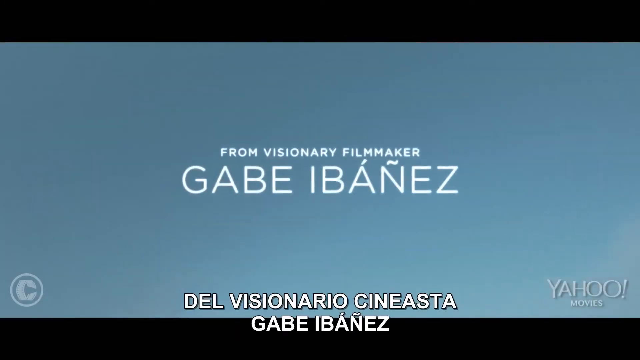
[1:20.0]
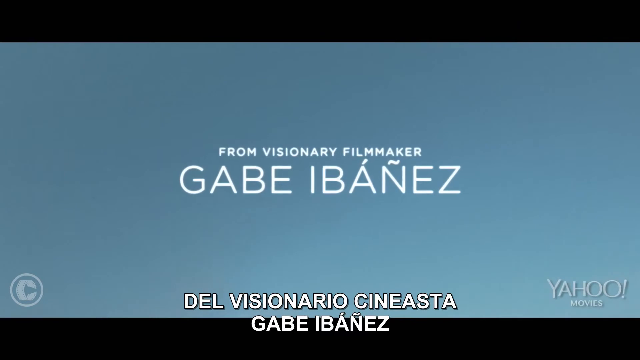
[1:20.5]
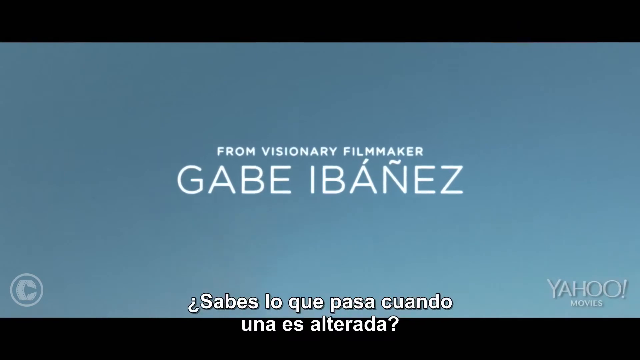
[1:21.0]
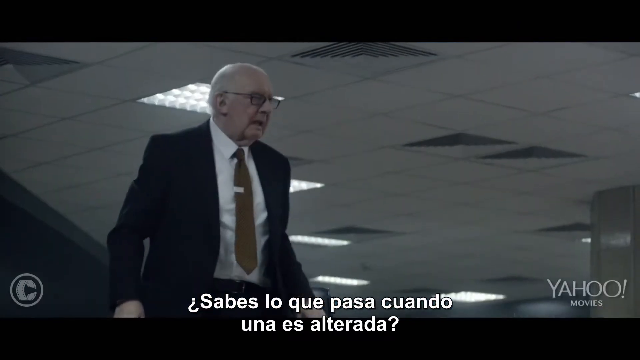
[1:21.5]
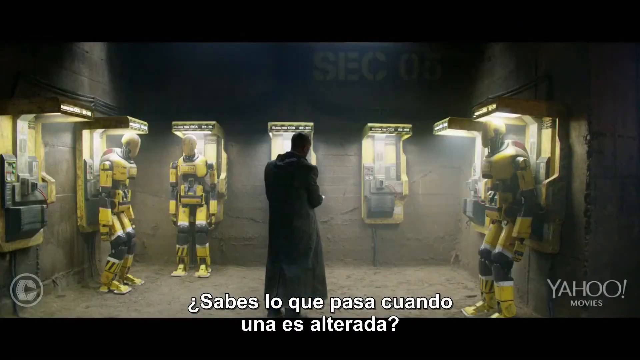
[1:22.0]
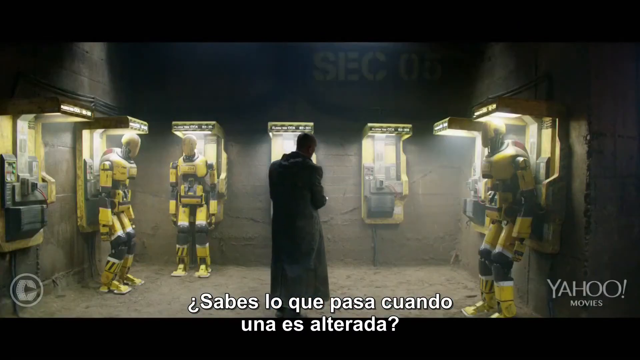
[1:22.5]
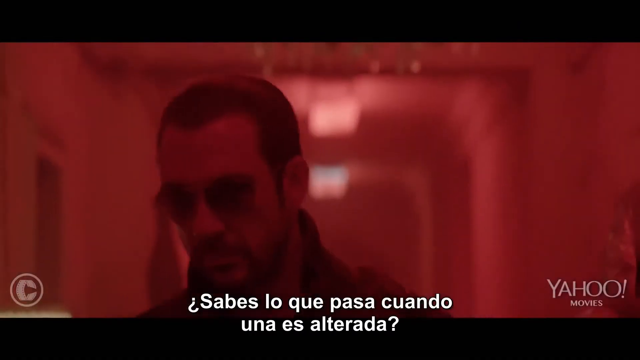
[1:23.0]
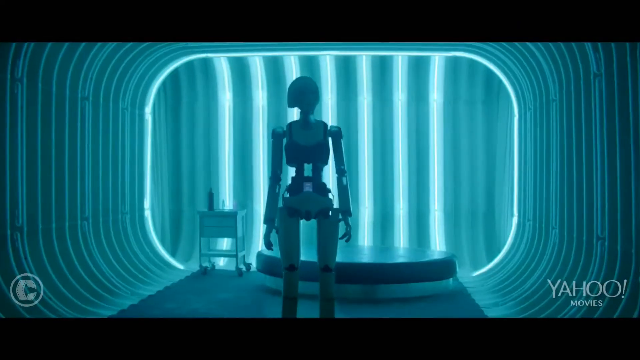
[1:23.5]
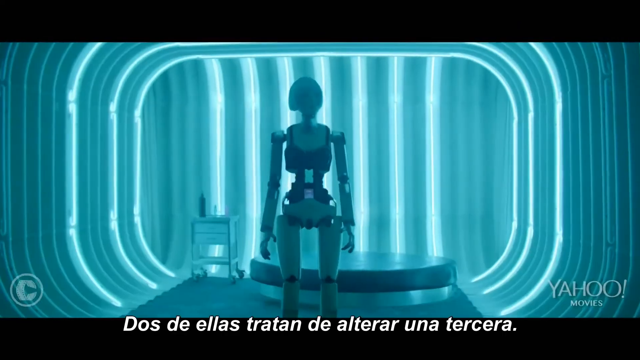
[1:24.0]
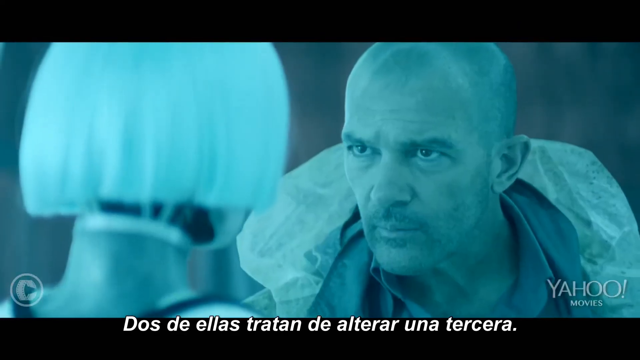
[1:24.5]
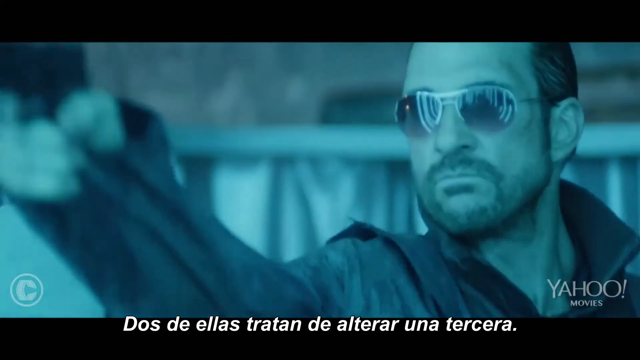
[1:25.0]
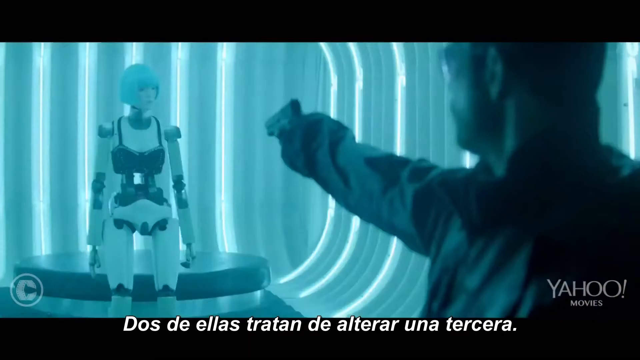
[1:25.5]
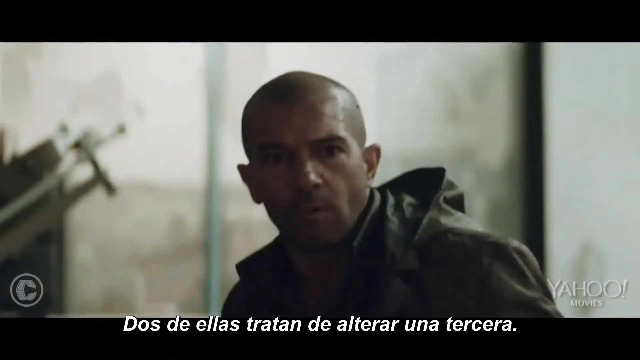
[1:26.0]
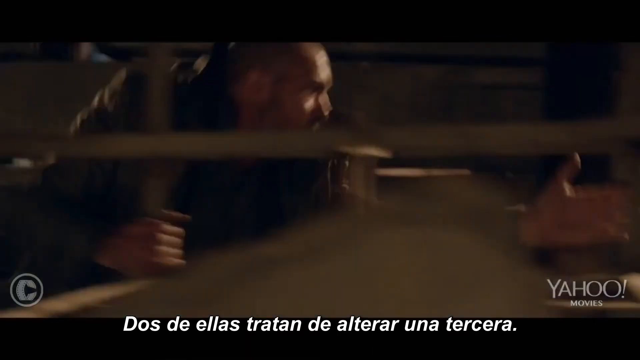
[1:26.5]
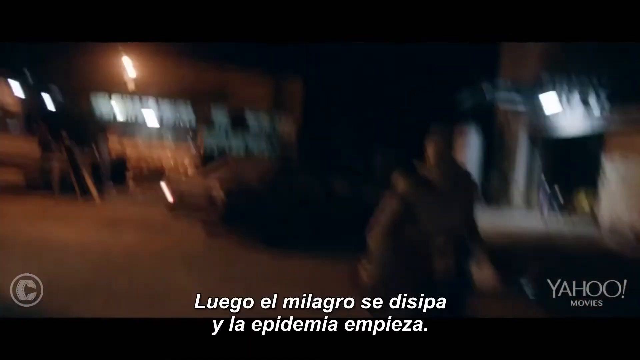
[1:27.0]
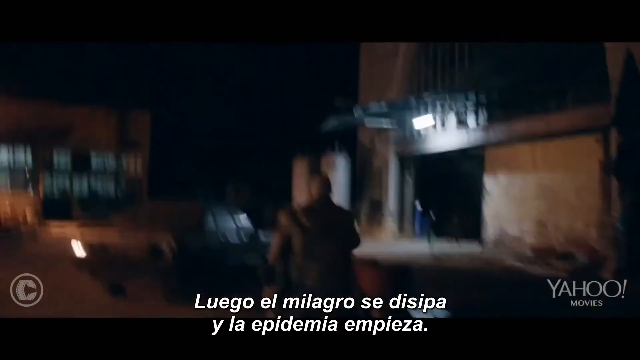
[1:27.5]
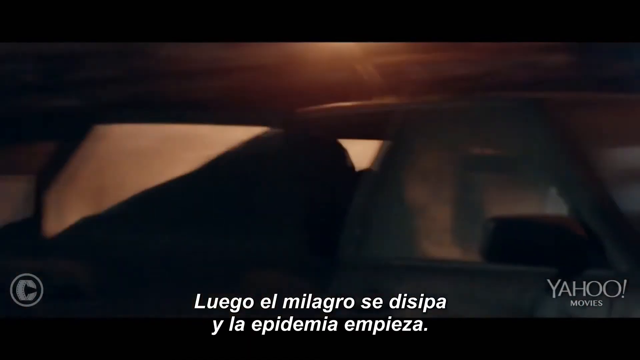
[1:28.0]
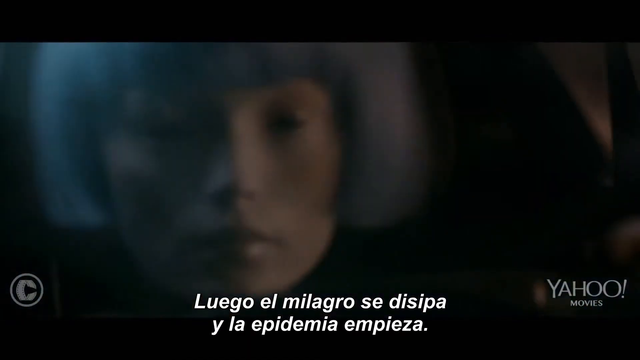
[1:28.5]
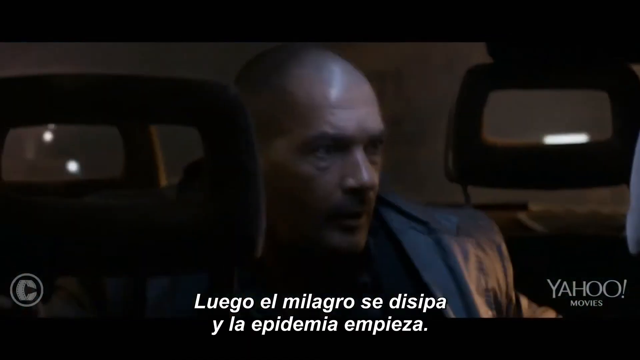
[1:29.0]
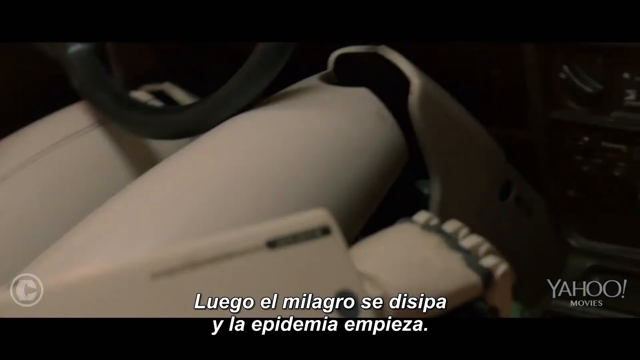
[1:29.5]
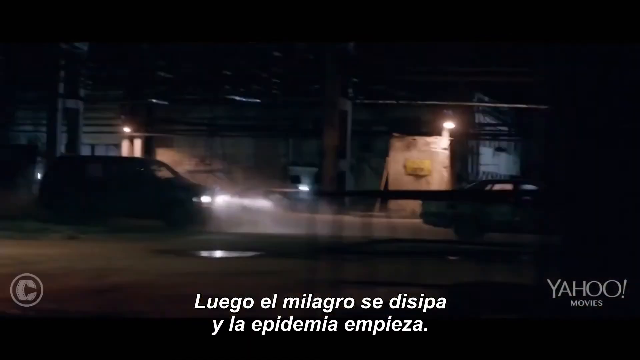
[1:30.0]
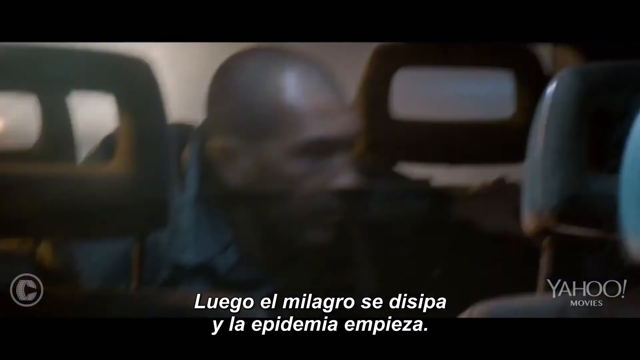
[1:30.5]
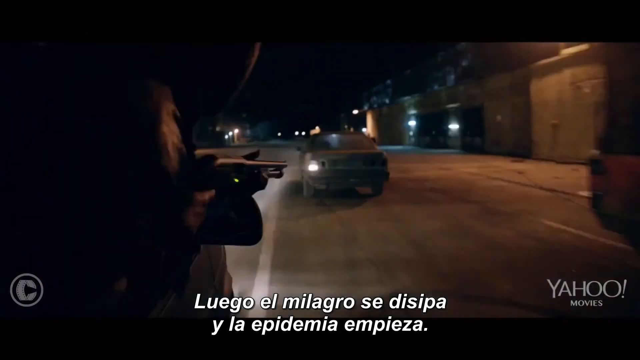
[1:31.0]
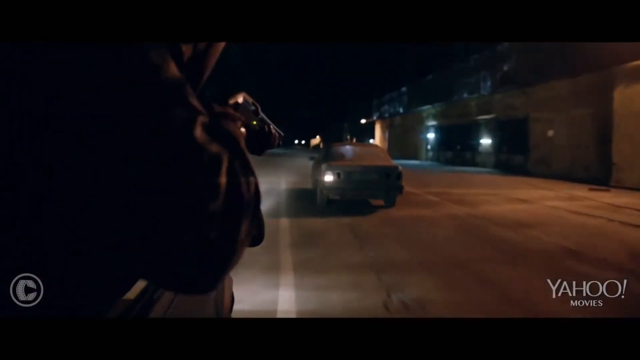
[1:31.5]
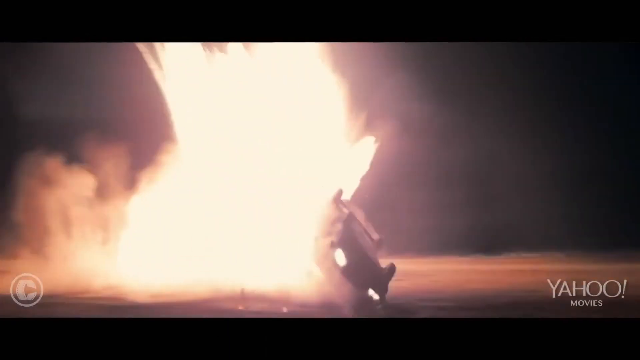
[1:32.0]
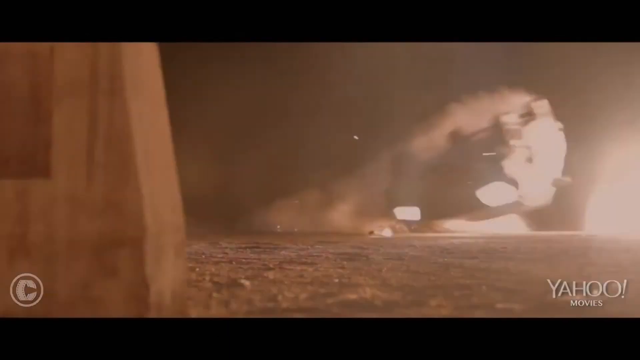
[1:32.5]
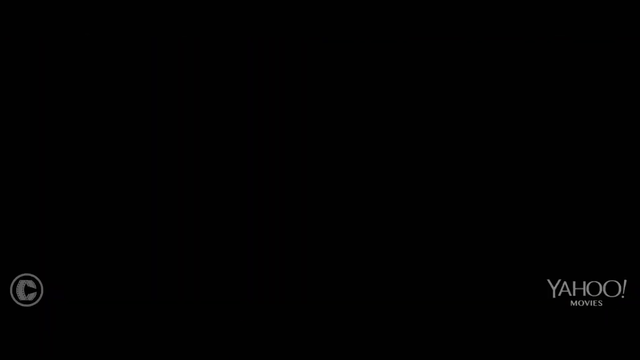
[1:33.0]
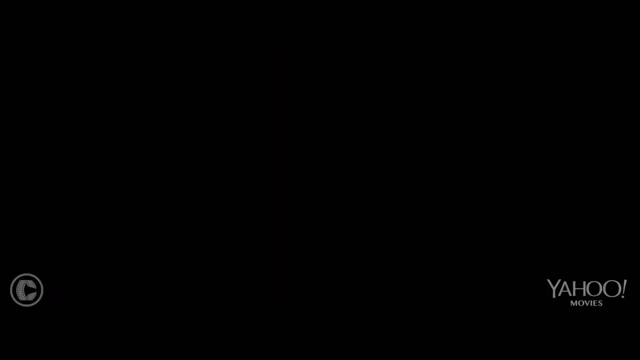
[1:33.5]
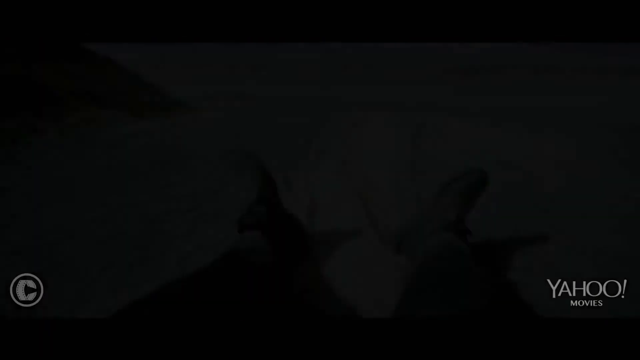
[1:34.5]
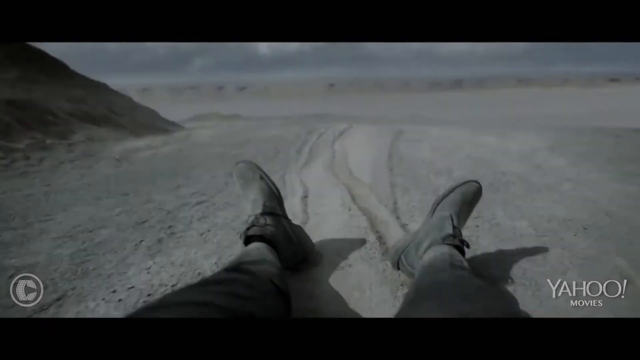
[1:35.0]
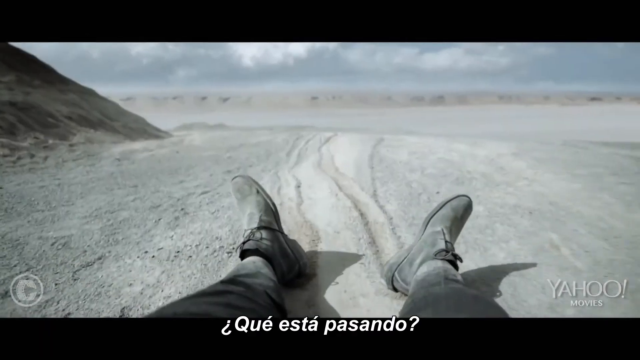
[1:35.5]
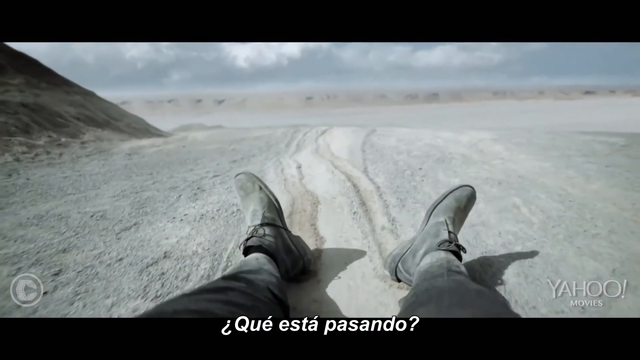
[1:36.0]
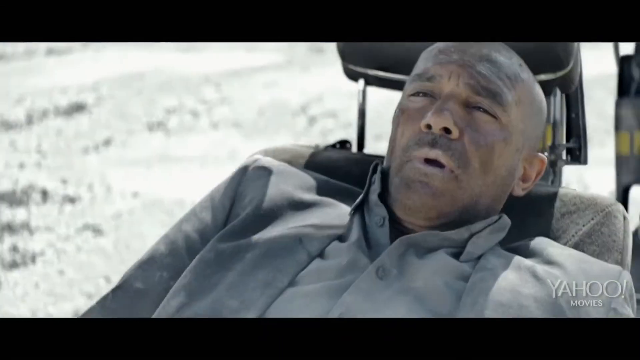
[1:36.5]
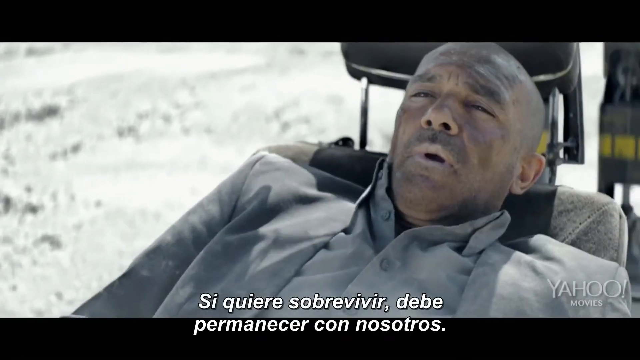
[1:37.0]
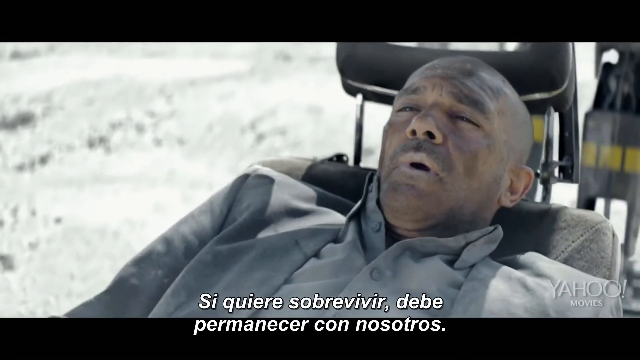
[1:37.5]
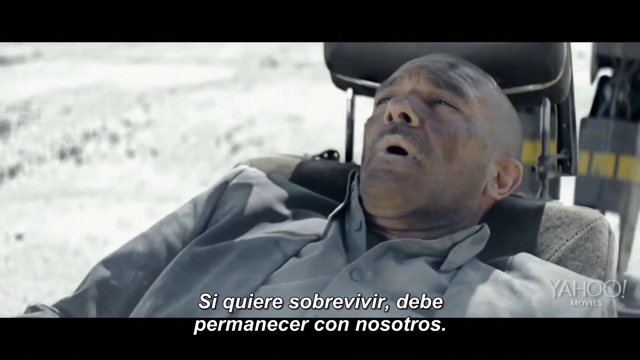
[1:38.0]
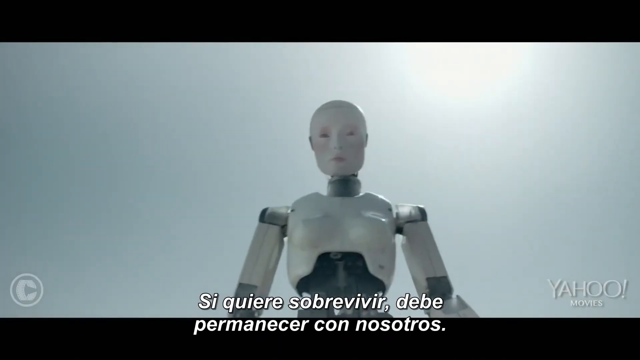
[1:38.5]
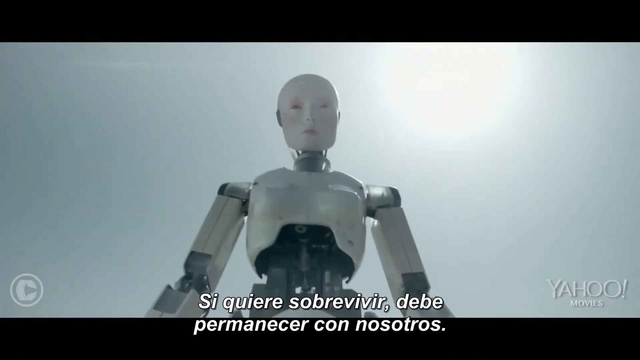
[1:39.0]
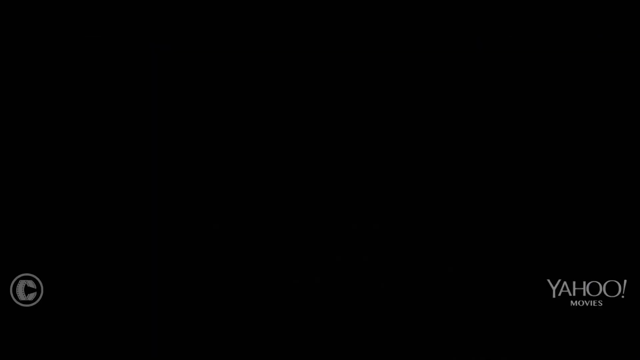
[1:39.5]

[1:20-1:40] Credits for the director and actors begin, the first reading "from the visionary filmmaker Gabe Ibanez." A scene with an older man follows, then a cut to a man in what looks like section six of a building, with robots stationed standing on a wall, not moving or doing anything. The man looks at the female-looking robot with the blue wig. An antagonist with a gun shoots at that robot and appears to hit its knee, seemingly the one that was being repaired. A man runs full speed at something. A robot is driving in a car chase; a missile or launcher is fired at the car, which flips over in an explosion. A robot drags a man across the desert, and they look at the deep desert sky.